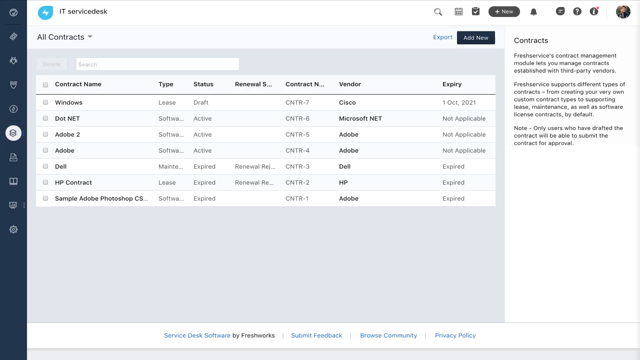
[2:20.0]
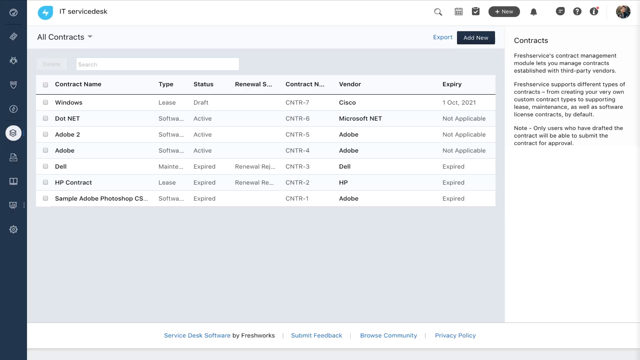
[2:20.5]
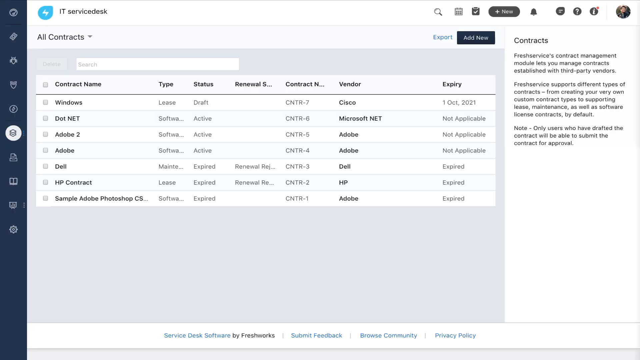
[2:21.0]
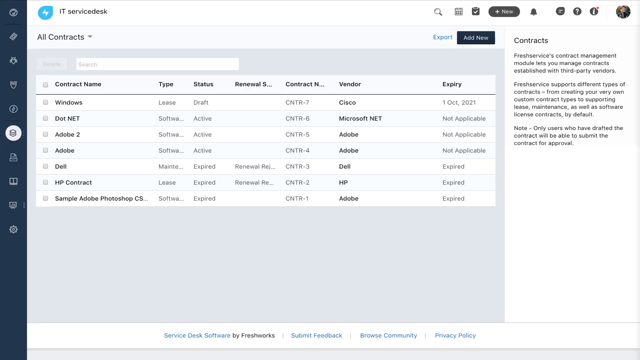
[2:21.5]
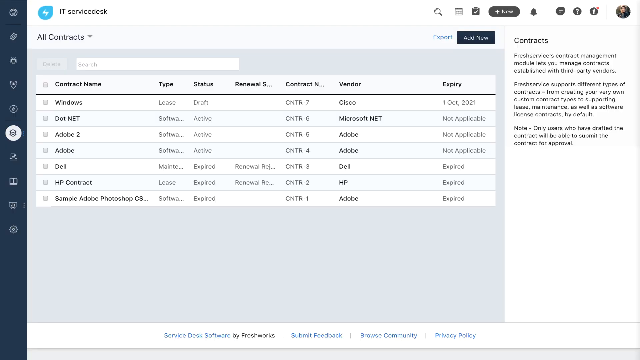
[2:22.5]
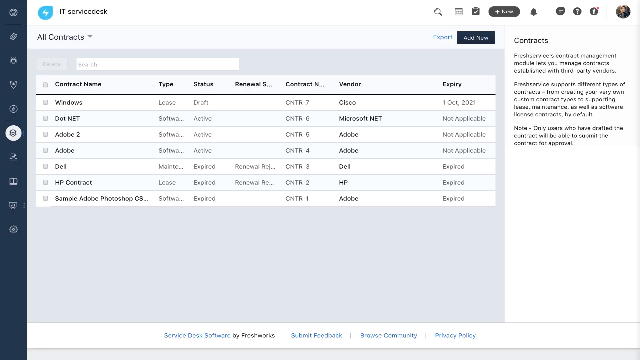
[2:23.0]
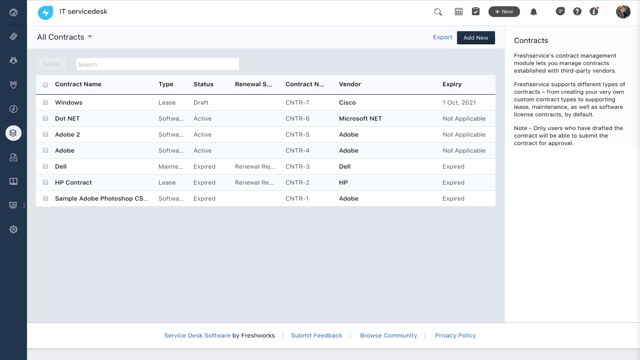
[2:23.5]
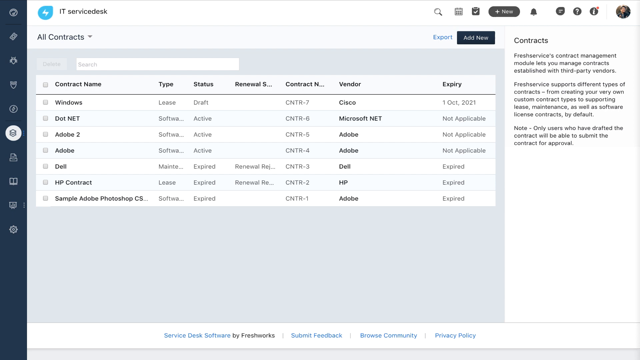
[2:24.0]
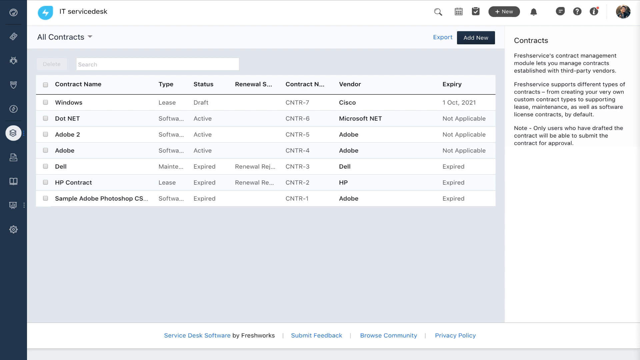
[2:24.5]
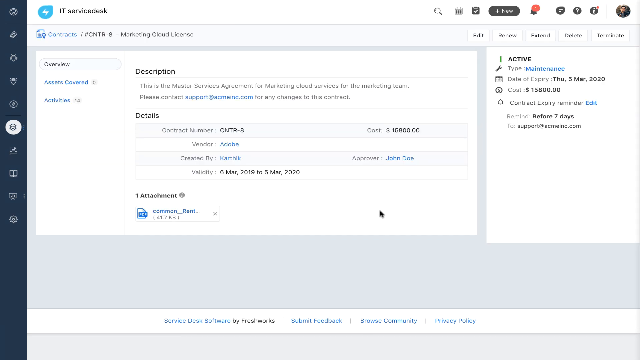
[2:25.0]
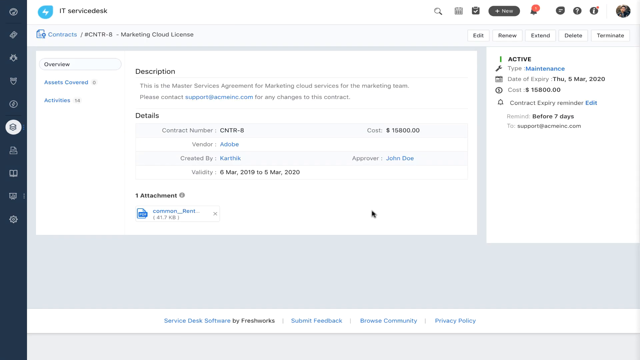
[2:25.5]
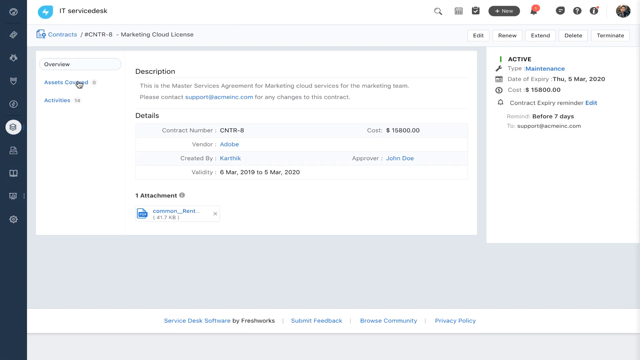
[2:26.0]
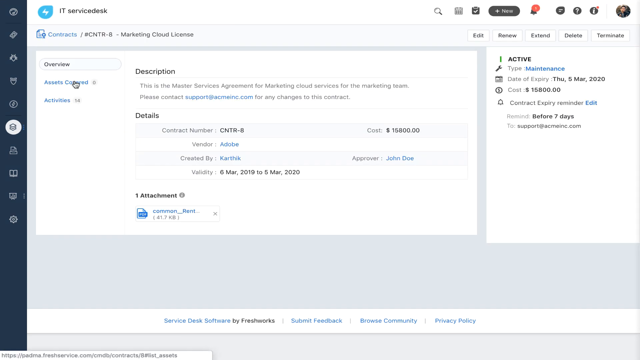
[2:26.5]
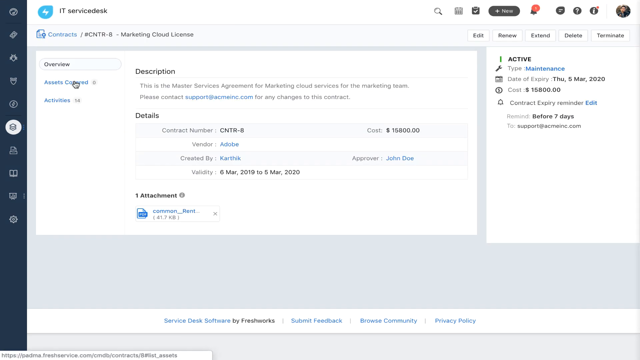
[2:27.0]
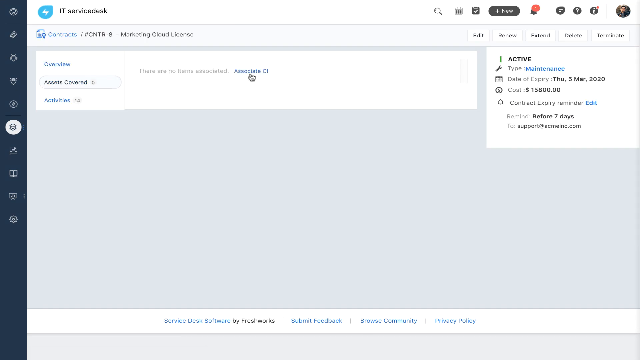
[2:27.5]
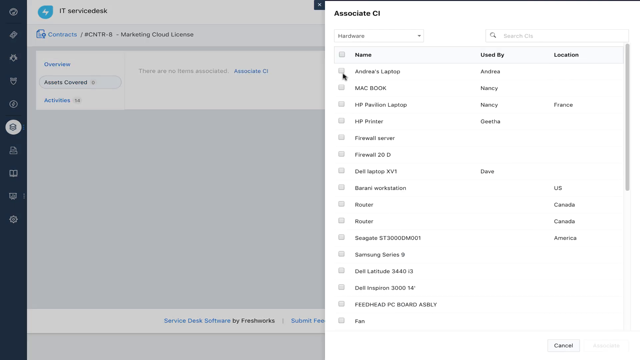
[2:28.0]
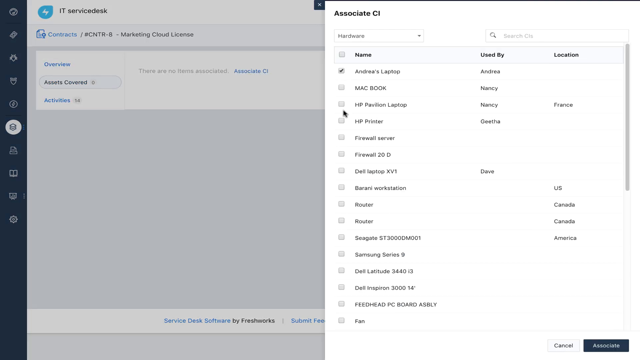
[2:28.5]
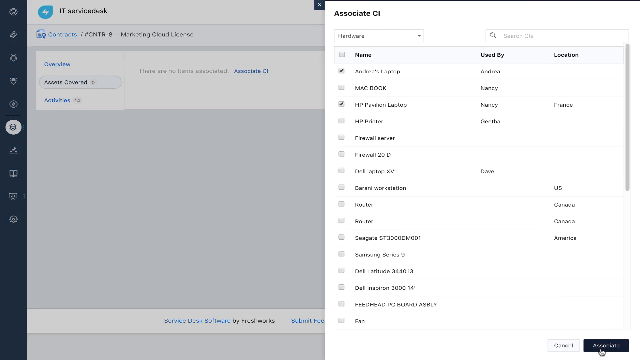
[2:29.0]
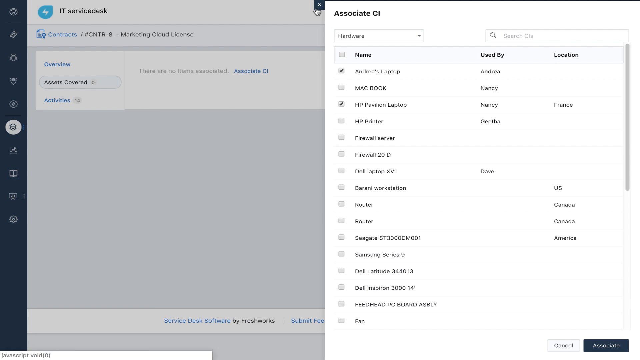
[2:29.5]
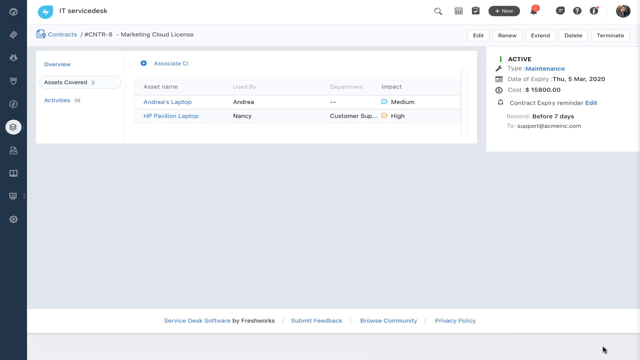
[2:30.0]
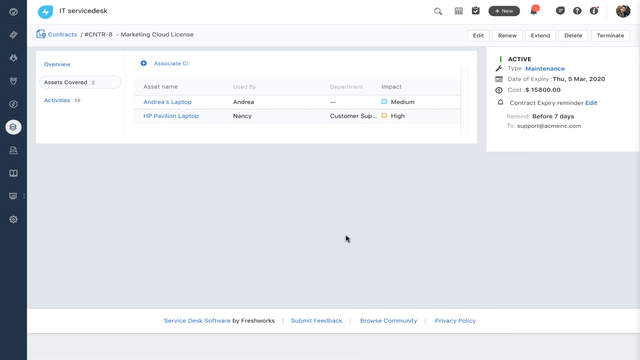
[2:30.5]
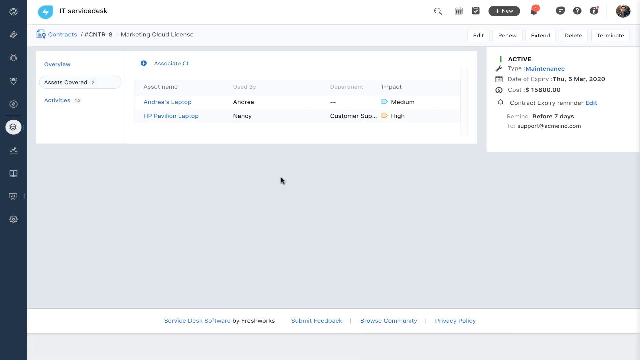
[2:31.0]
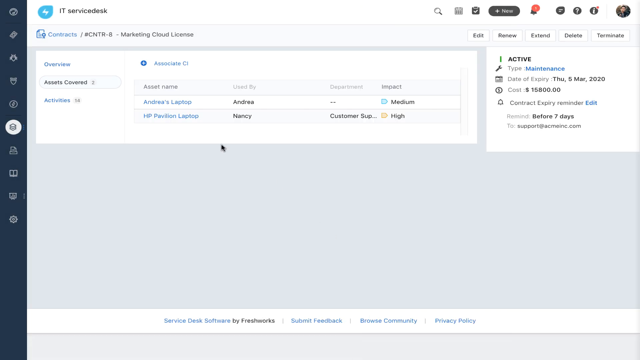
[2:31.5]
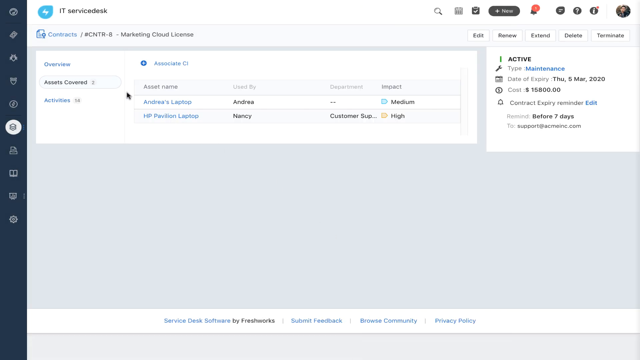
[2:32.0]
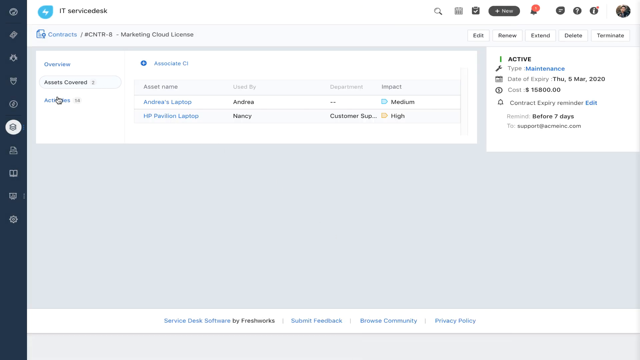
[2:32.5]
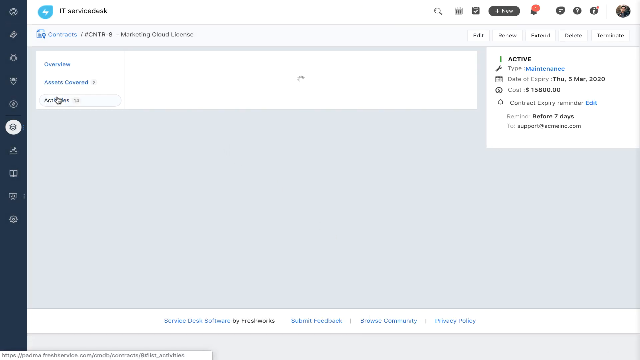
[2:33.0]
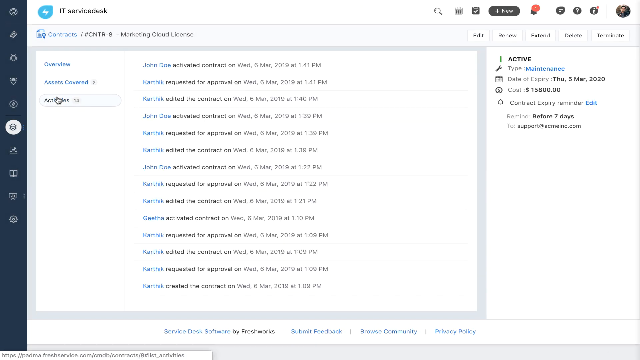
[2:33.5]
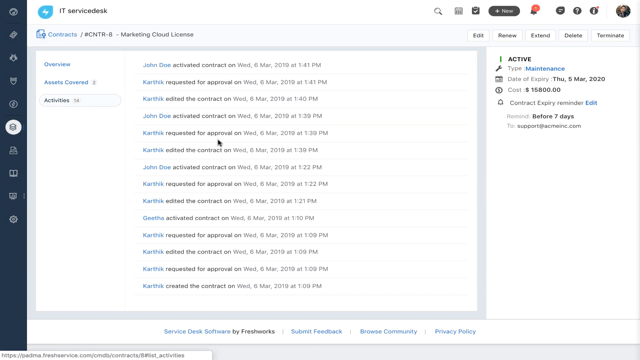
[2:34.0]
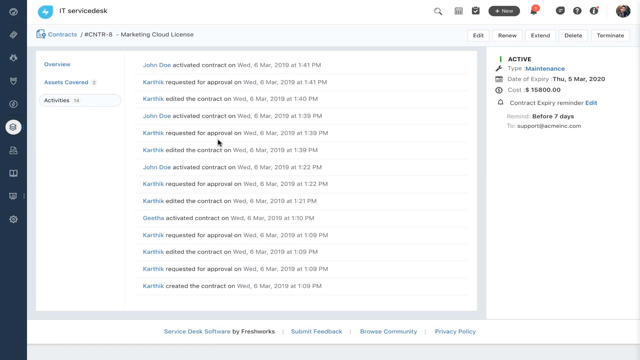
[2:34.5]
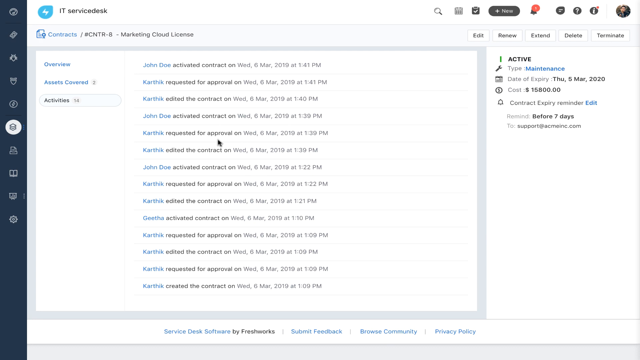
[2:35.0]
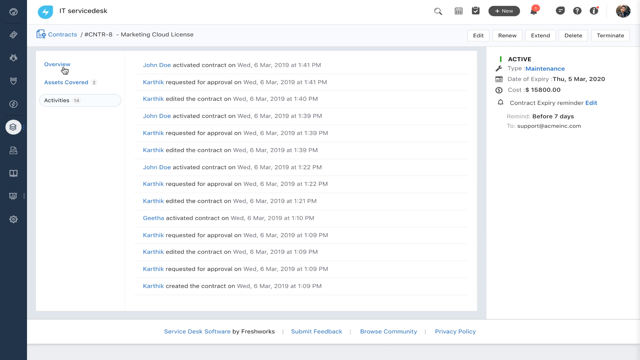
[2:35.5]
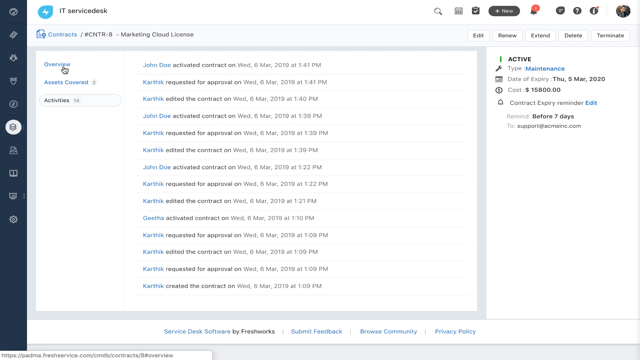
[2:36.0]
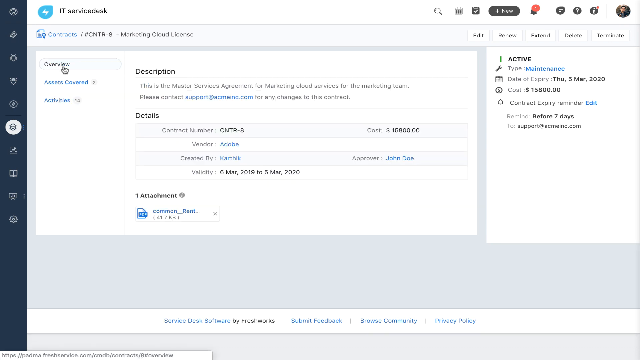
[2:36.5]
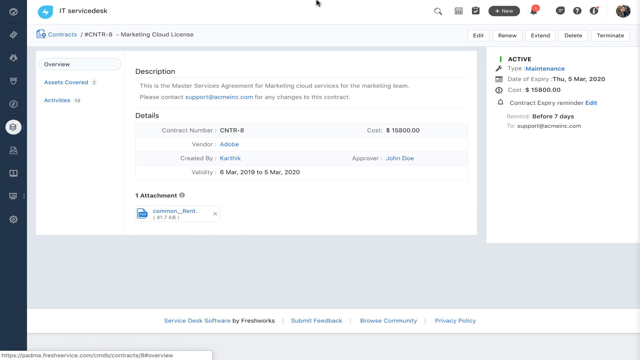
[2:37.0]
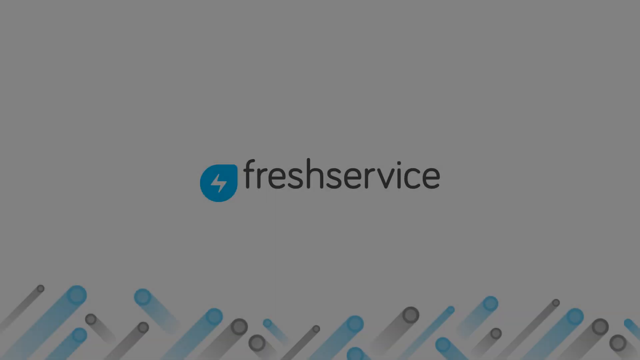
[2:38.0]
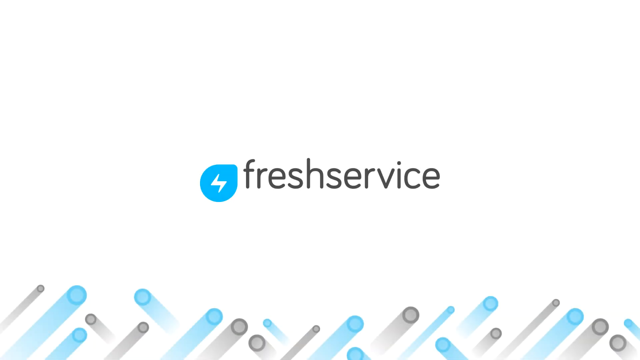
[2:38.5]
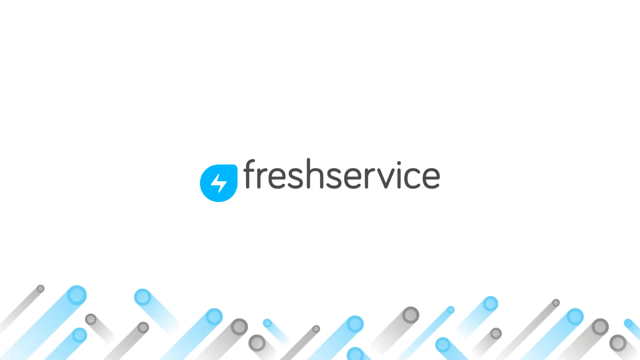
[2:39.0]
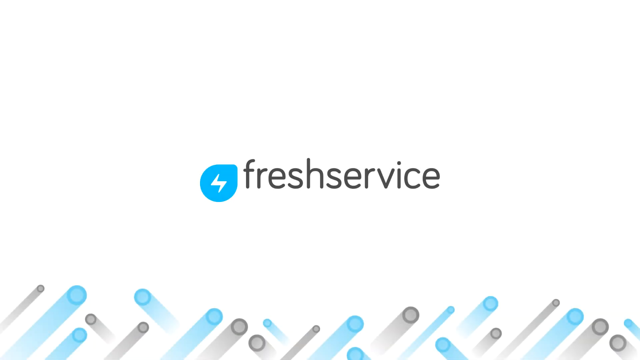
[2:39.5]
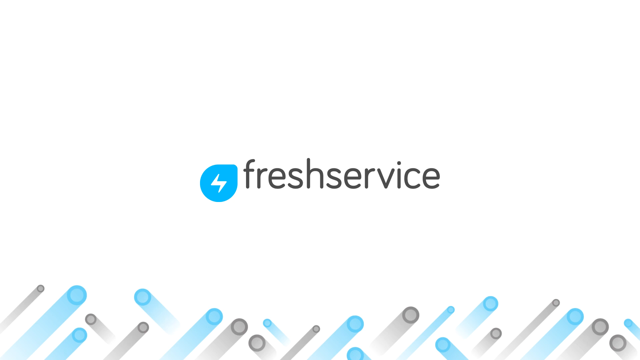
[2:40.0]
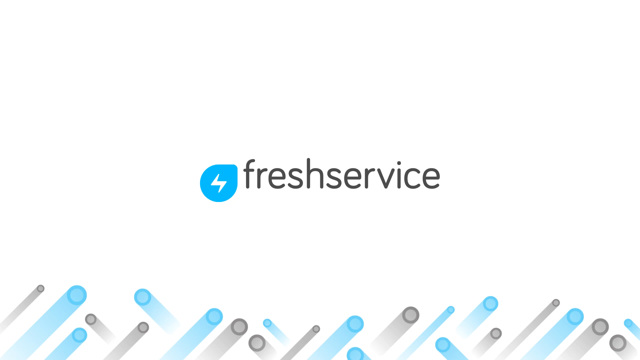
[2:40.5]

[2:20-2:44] The all contracts section of the app lists contracts named "windows dot net adobe 2 adobe dell hp contract and simple adobe photoshop." Some of the contracts have expired and some are still active; the first expires on the 1st of October 2021. Contract number 8, Marketing Cloud License, is then shown on its overview section. The user clicks on assets covered and then on associate, toggles the Andreas laptop and HP Pavilion laptop, and presses associate. The user clicks on activities, which show that John Doe activated the contract on Wednesday 6th March 2019 at 1.41pm, along with other users' activities in the Fresh Service app: some activated the contract, some edited it, some requested approval and some created it. The video then exits to the Fresh Service icon.